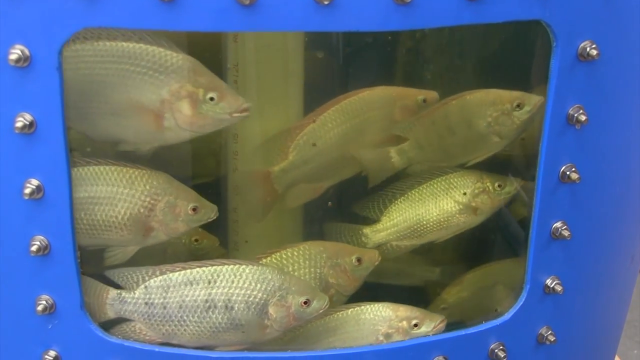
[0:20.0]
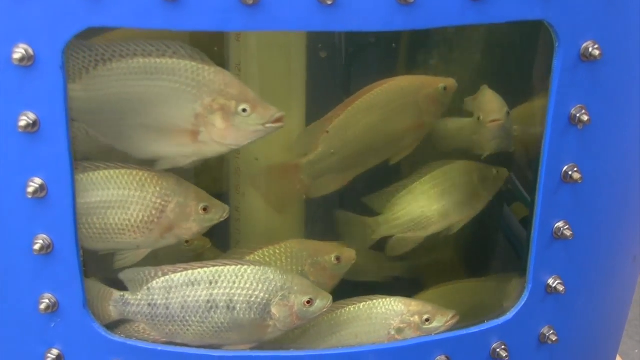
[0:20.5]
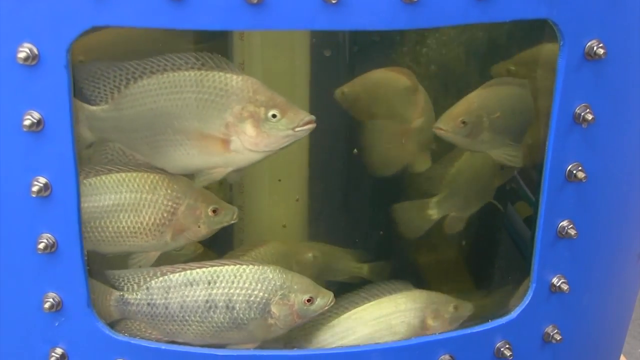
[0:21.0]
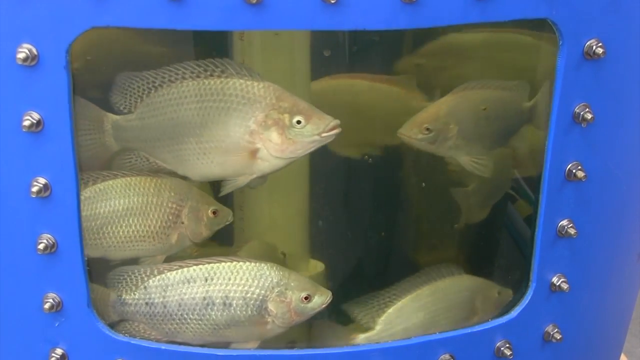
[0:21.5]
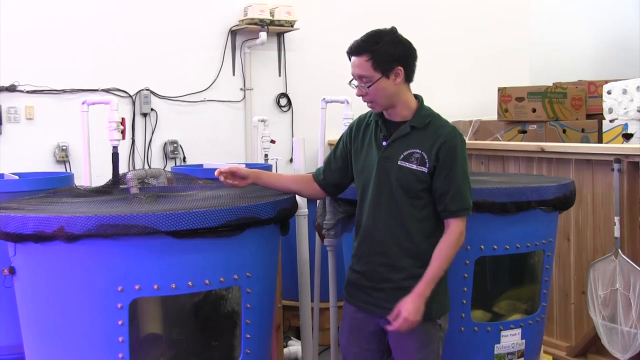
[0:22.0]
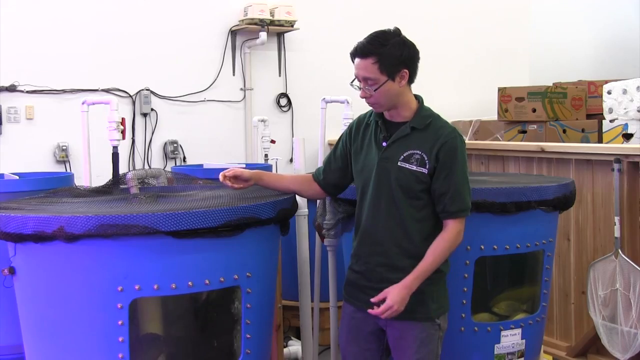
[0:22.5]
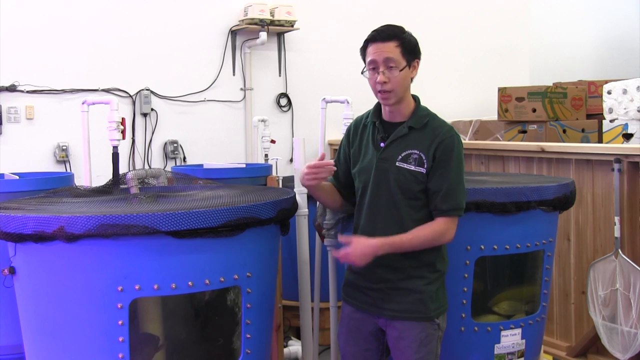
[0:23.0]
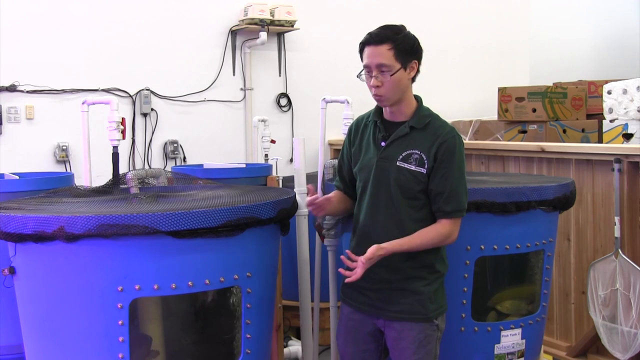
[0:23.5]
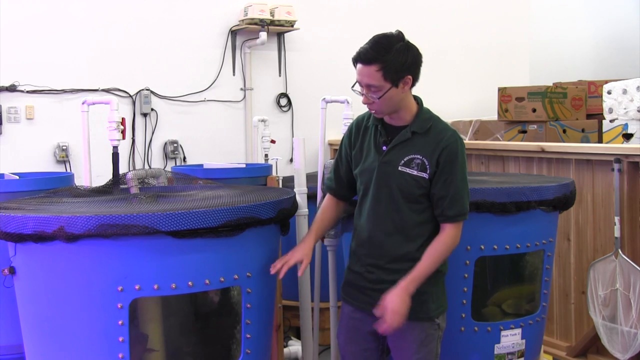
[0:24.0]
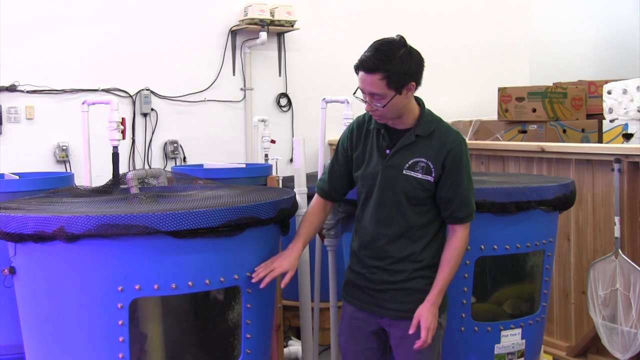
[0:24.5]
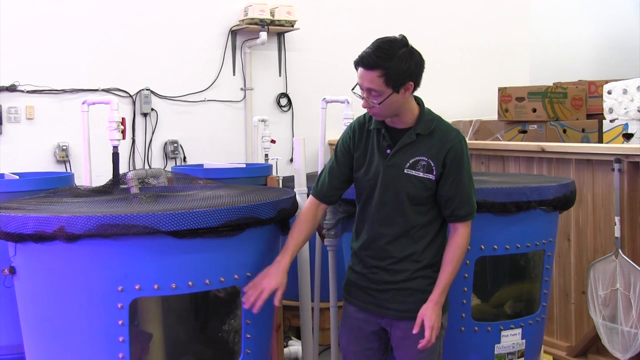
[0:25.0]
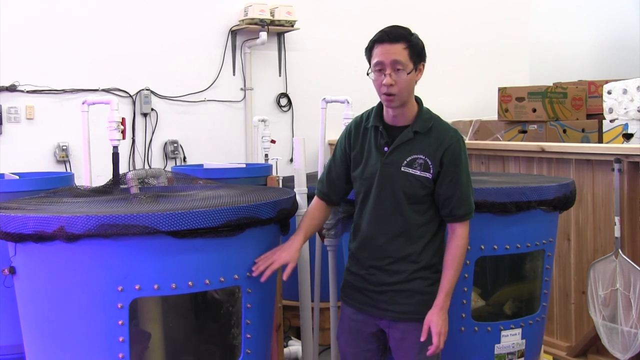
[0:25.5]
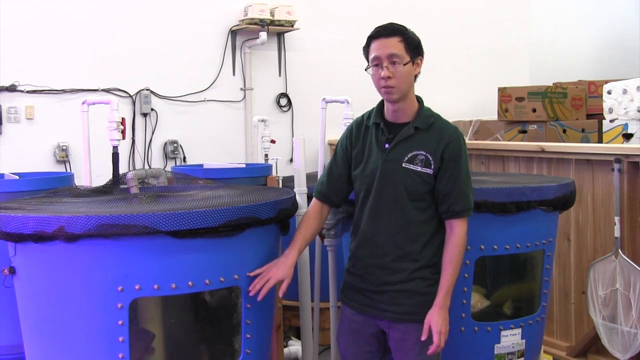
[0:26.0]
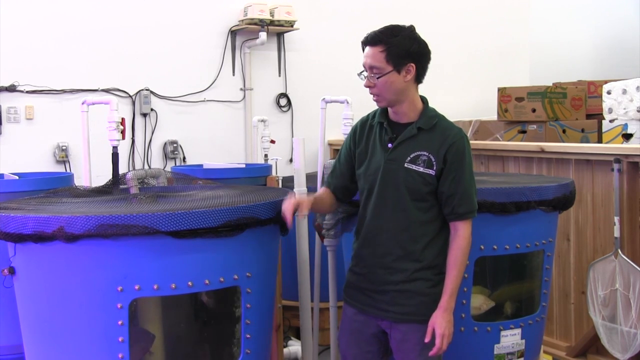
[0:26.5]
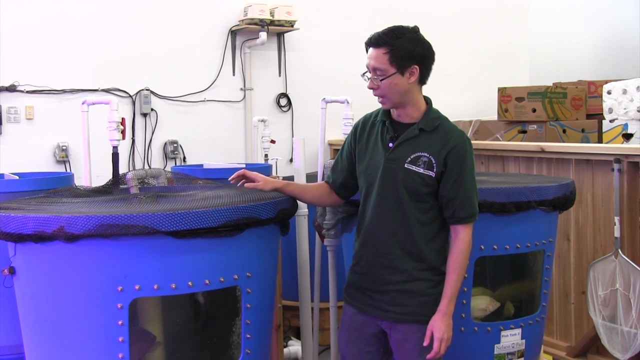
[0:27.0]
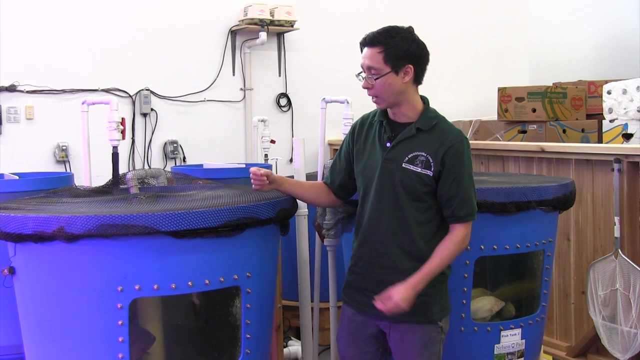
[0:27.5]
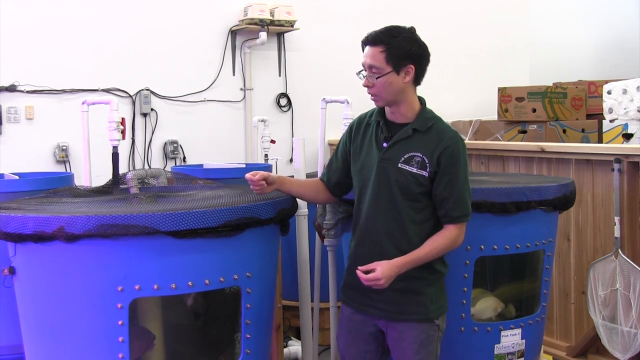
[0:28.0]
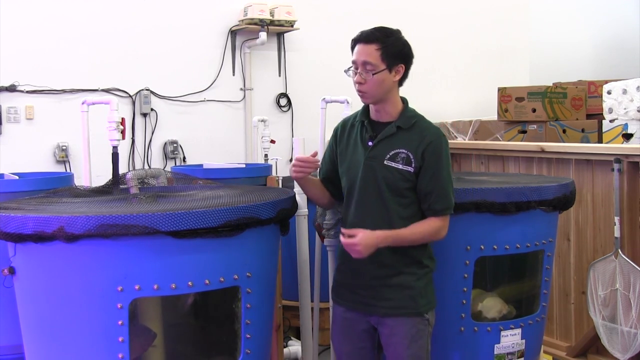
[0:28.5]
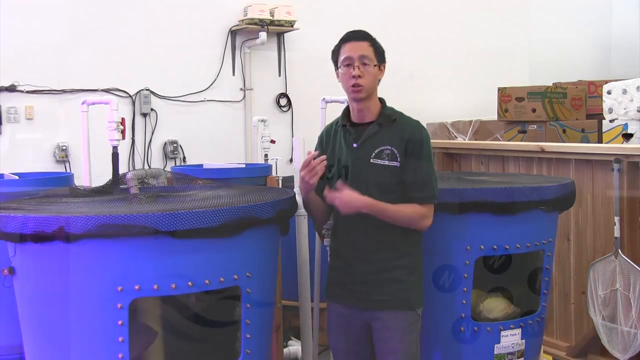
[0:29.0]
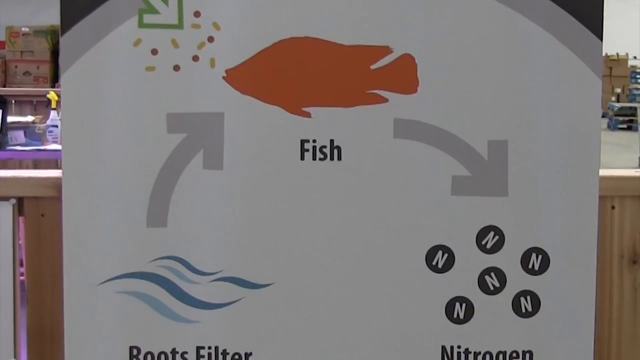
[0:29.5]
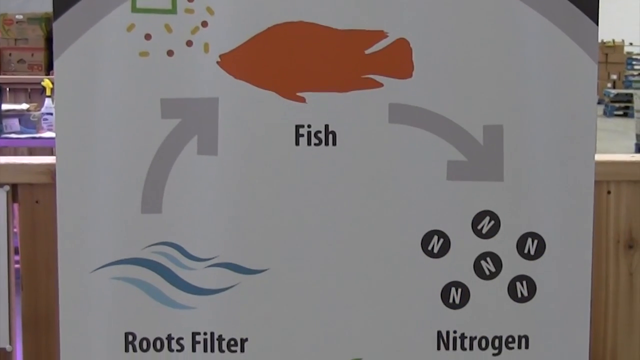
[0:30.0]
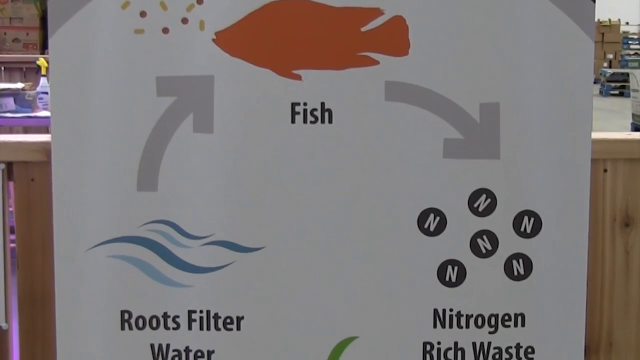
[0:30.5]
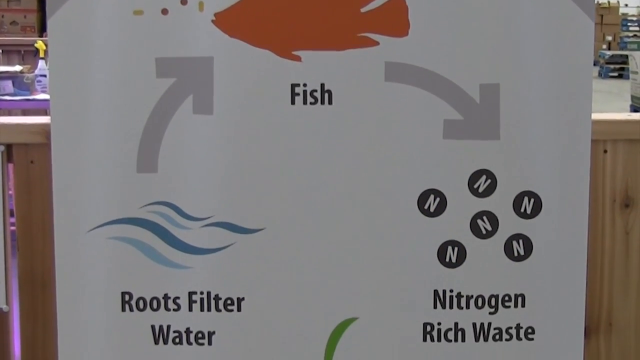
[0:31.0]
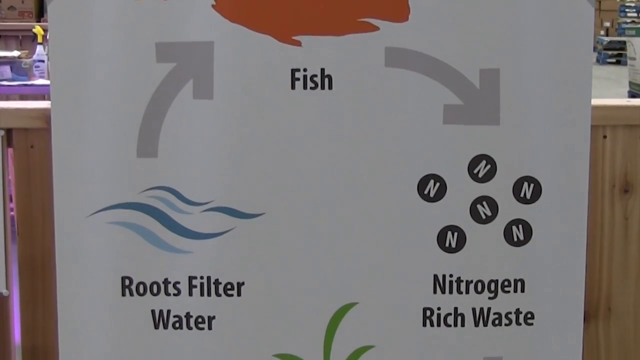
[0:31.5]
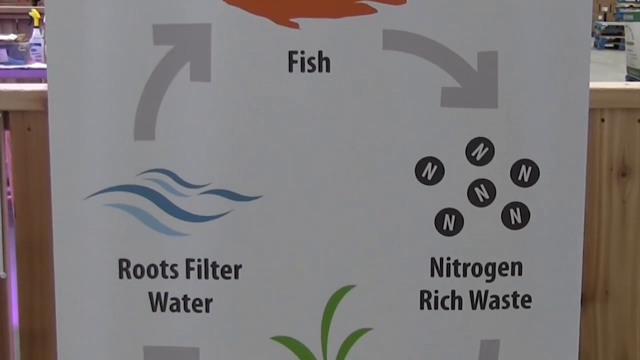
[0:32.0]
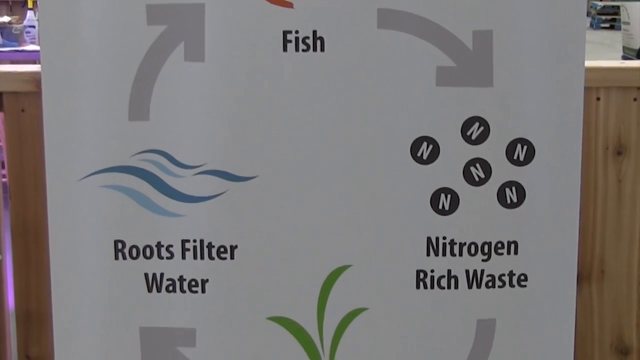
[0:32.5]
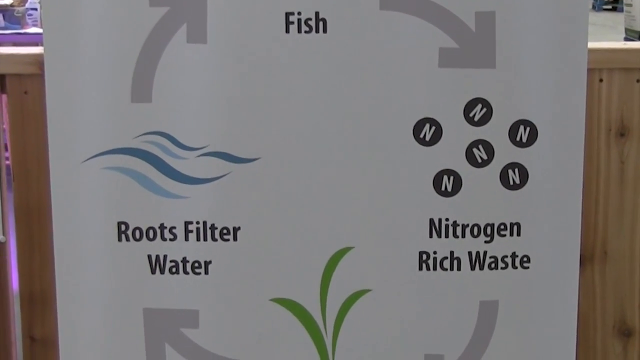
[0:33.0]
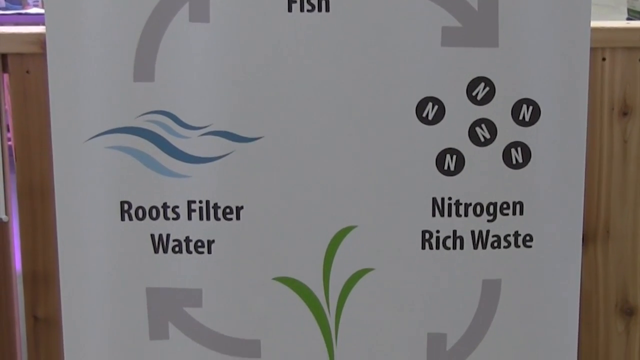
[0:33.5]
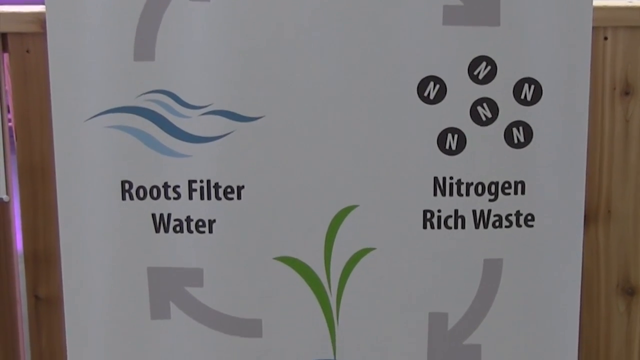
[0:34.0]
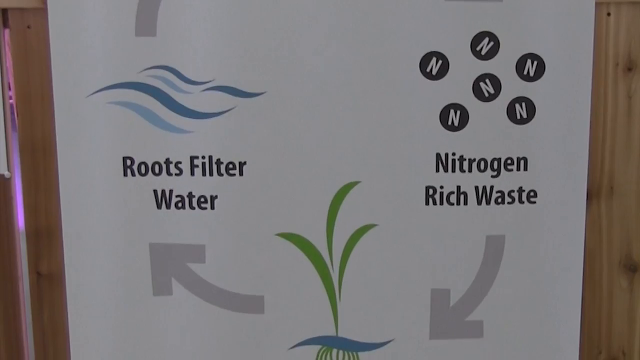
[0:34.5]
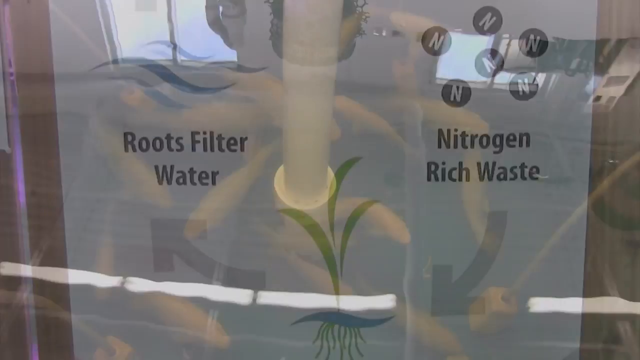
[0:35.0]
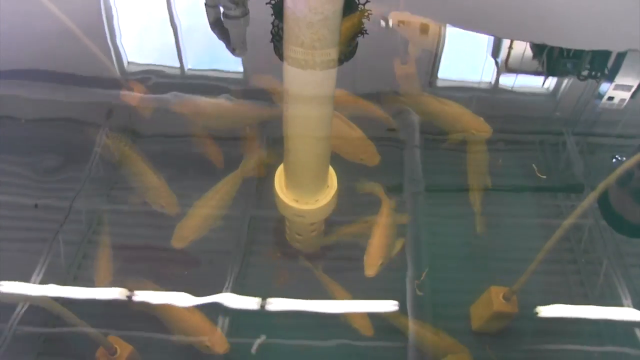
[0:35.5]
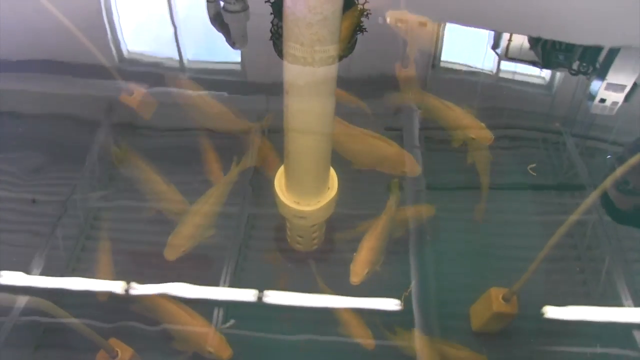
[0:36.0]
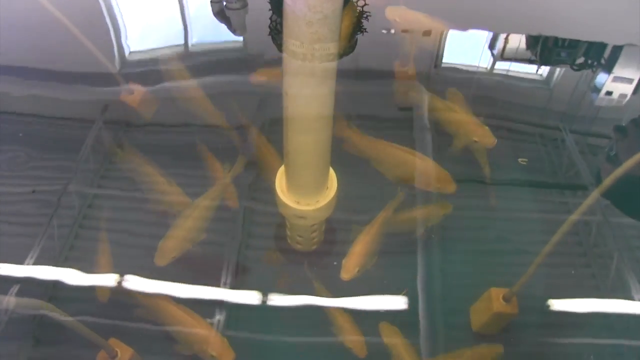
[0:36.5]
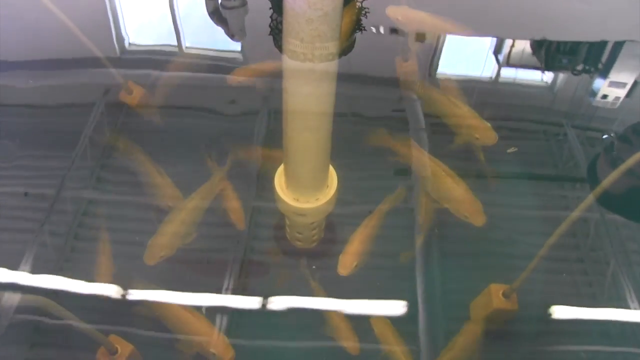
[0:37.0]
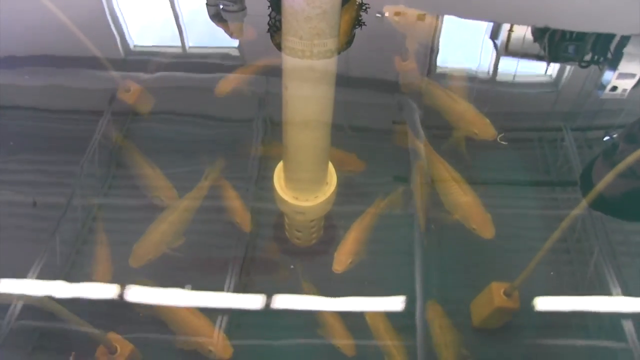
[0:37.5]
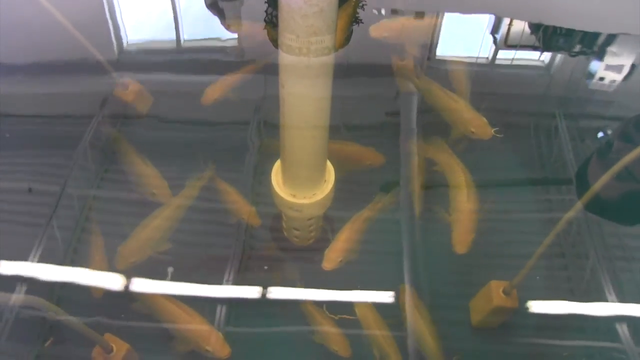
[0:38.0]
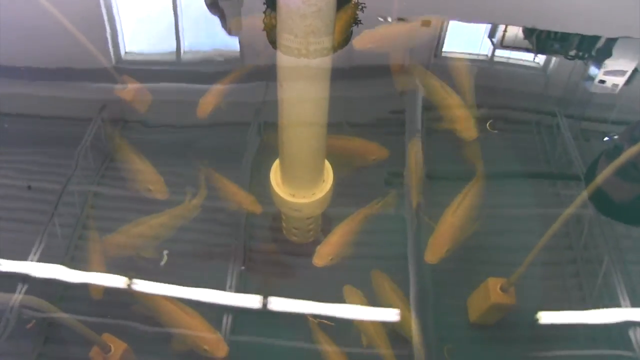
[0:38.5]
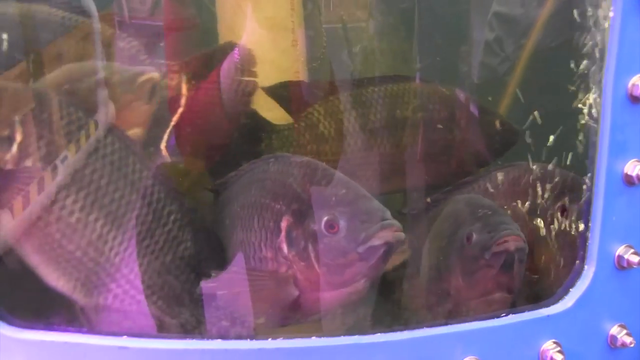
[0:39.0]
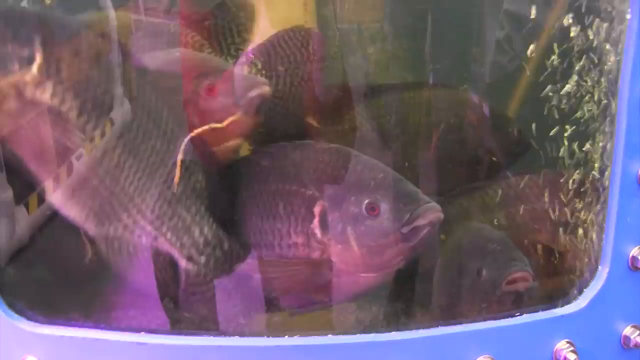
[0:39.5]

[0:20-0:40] Flat, silvery white fish with big eyes swim; their bodies are very flat and somewhat wider in the middle. They are visible through a clear porthole into what looks like a big blue plastic barrel, part of a fish hatchery of some sort. The video cuts to the employee, who appears to wear a dark navy blue shirt and glasses. He is Asian, and he talks and gestures toward the fish tanks. Circulation equipment is visible; it is clearly a fish hatchery setup. A big white sign illustrates the life cycle of the hatchery. On its left is a diagram of roots, a filter, and water with blue wavy lines above it. A gray arrow points up to a big orange clip-art fish labeled "fish". Down to the right, text reads "nitrogen-rich waste" beside black circles with N's in them. Another gray arrow curves down to green plants, apparently the kind of plants that were resting on top of the fish hatchery, completing the cycle. White fish are then seen swimming in a tank from above. Through another clear porthole in a blue barrel, black fish are visible, possibly a kind of carp; one black and white fish looks out through the porthole.